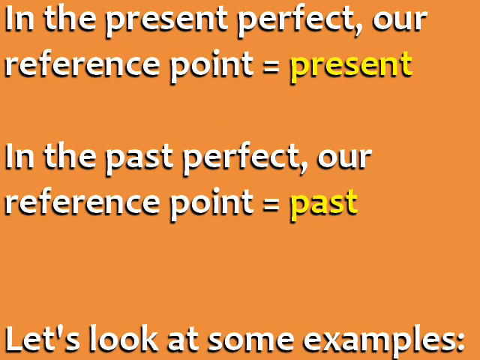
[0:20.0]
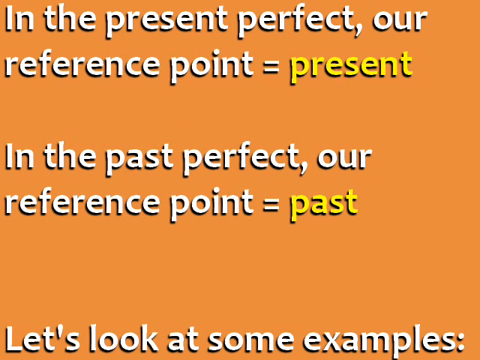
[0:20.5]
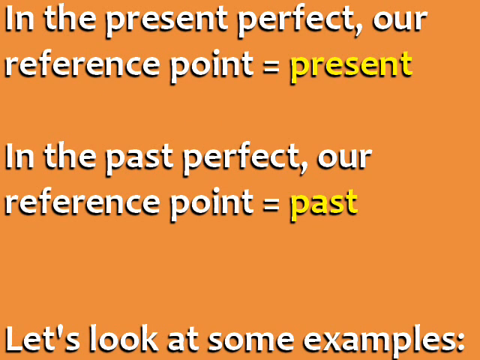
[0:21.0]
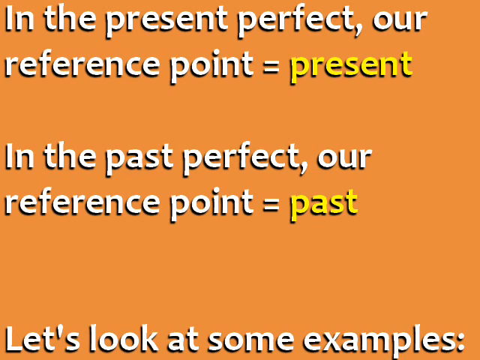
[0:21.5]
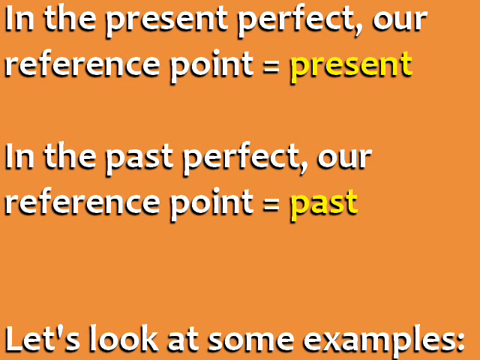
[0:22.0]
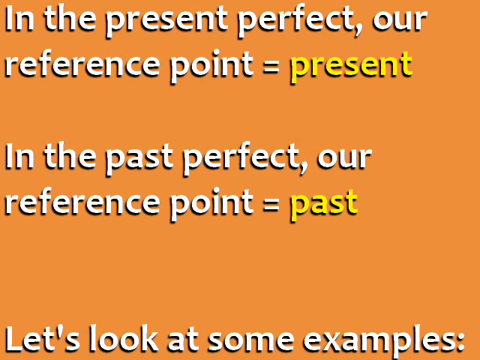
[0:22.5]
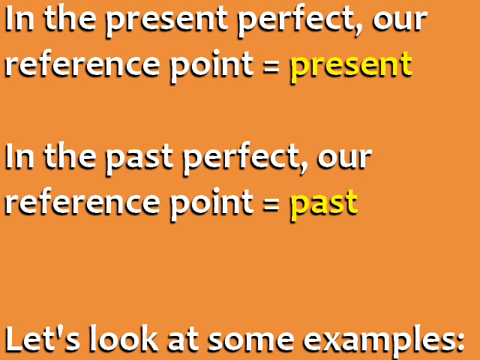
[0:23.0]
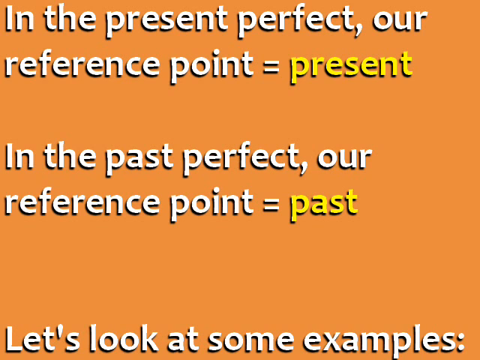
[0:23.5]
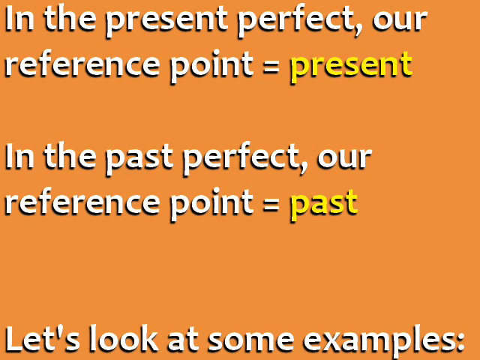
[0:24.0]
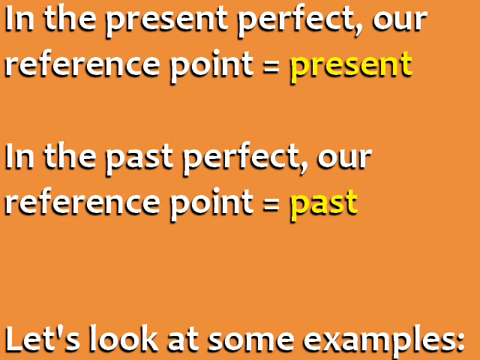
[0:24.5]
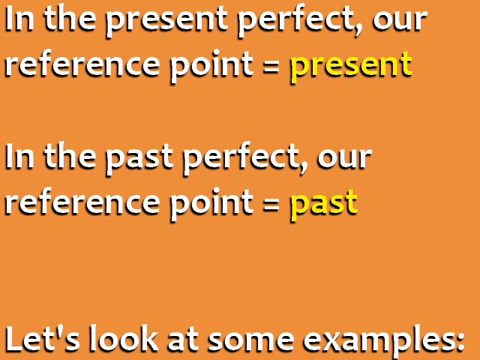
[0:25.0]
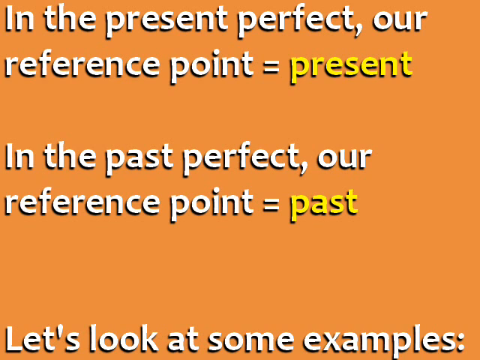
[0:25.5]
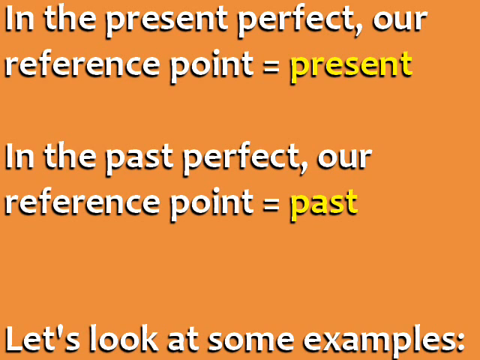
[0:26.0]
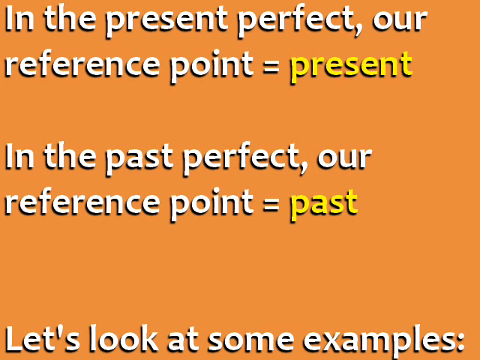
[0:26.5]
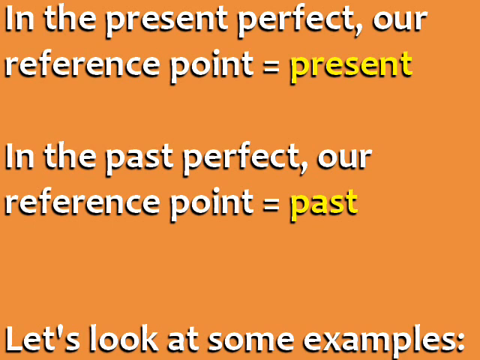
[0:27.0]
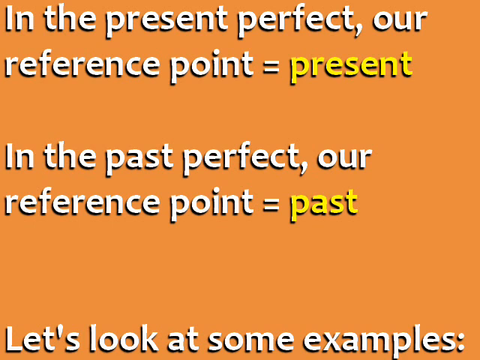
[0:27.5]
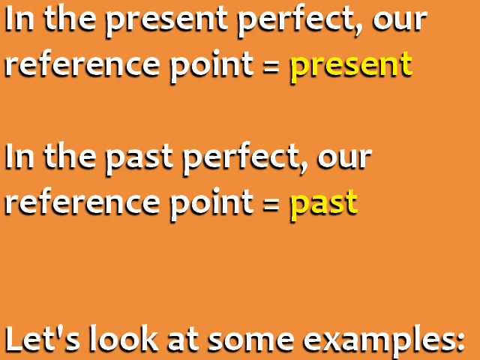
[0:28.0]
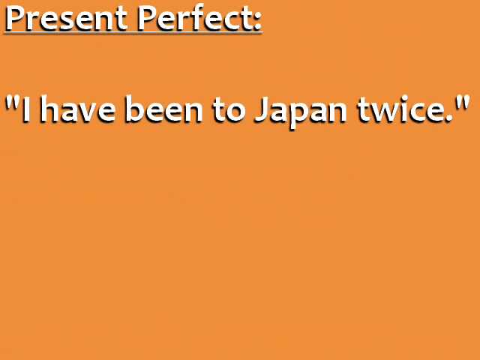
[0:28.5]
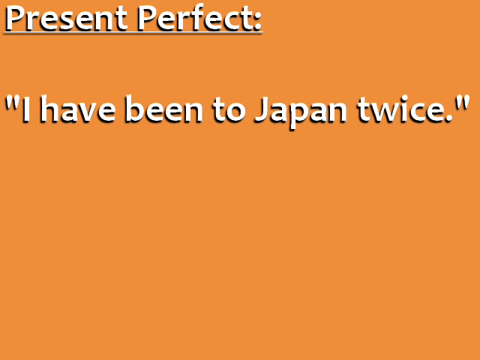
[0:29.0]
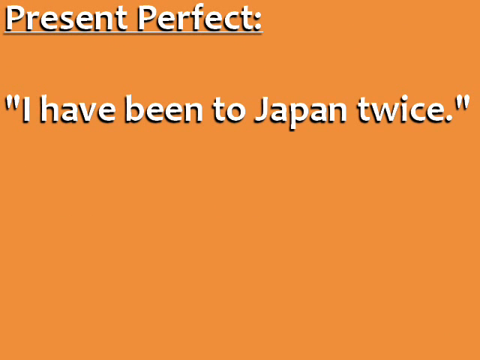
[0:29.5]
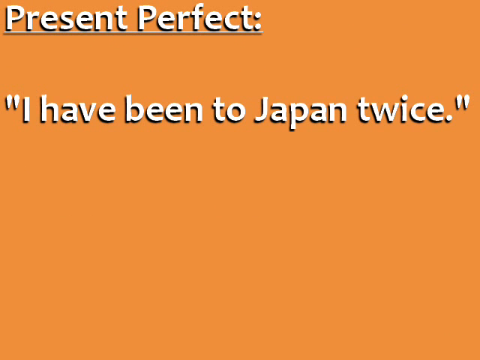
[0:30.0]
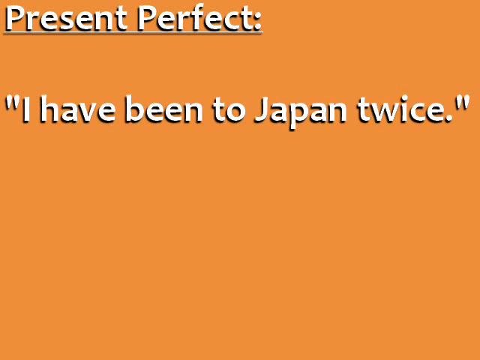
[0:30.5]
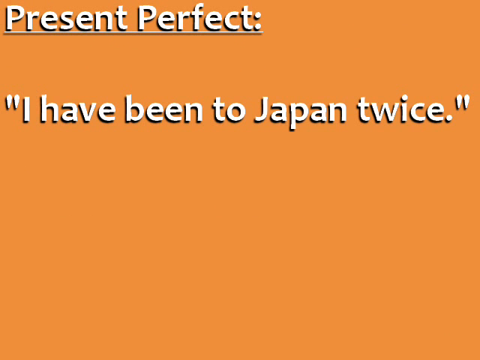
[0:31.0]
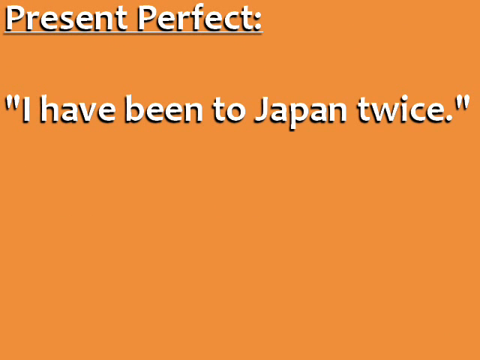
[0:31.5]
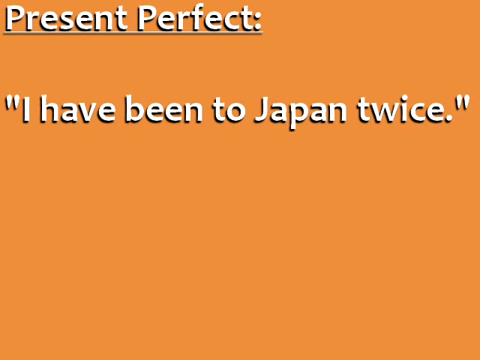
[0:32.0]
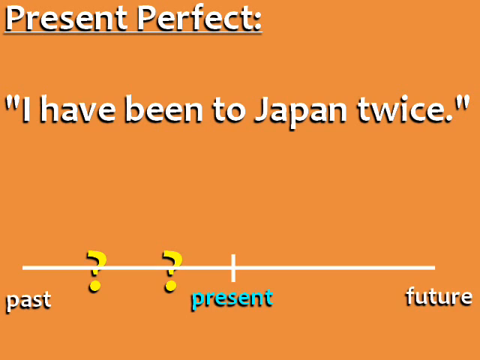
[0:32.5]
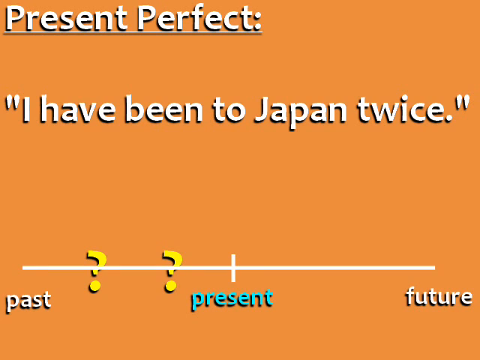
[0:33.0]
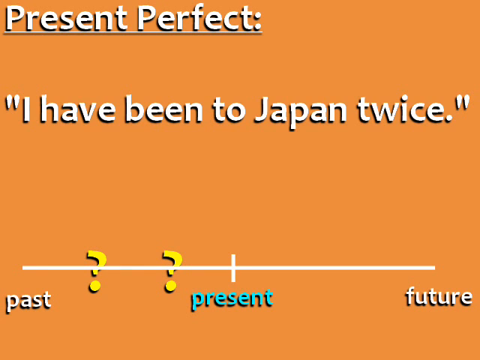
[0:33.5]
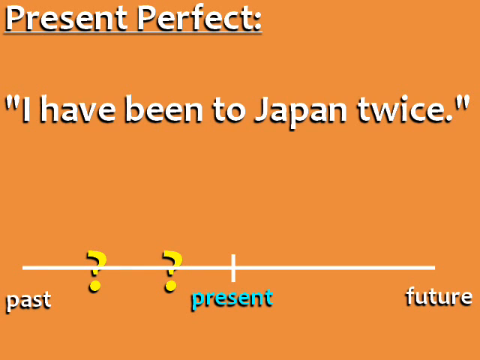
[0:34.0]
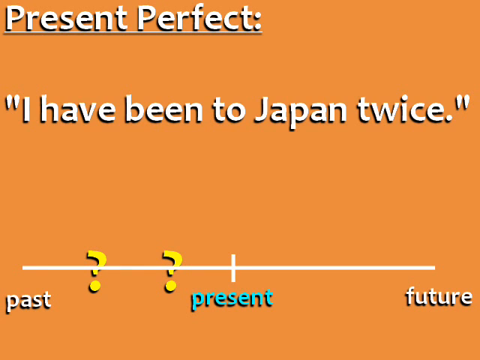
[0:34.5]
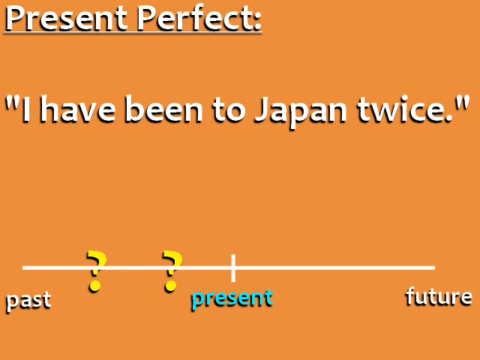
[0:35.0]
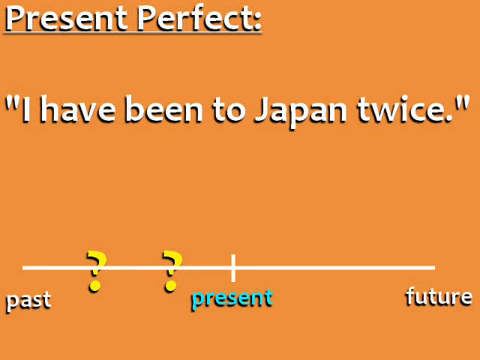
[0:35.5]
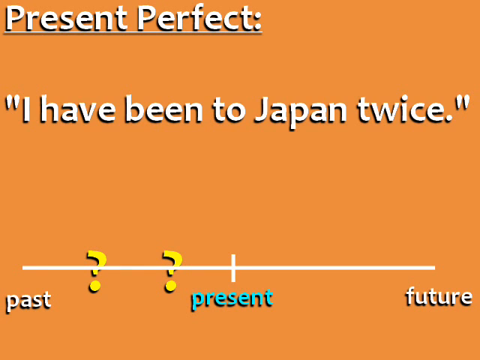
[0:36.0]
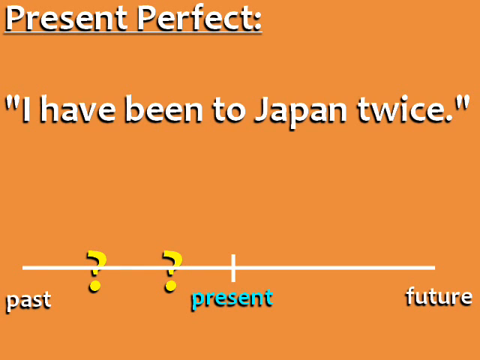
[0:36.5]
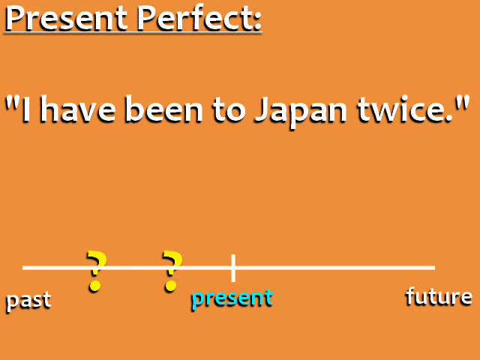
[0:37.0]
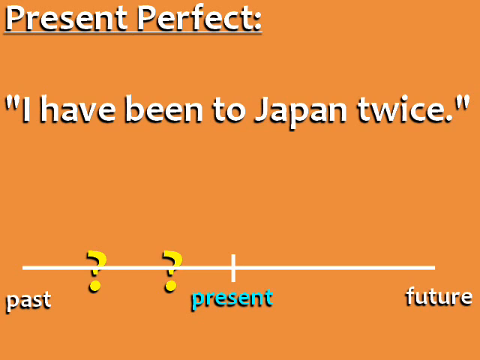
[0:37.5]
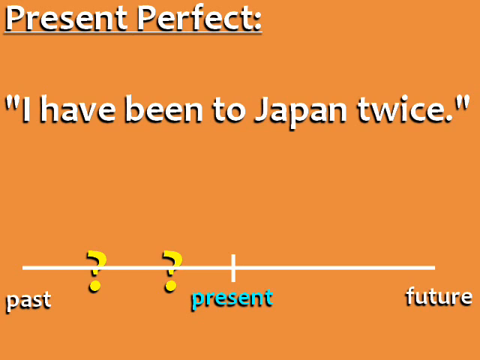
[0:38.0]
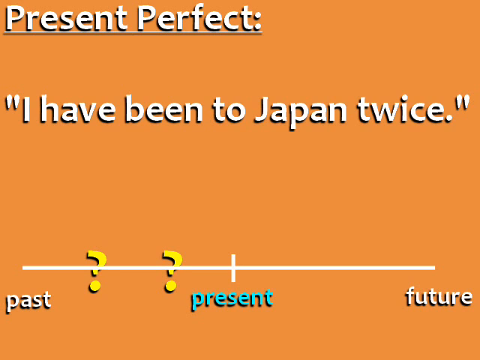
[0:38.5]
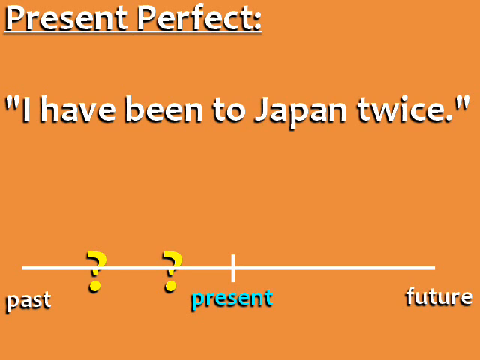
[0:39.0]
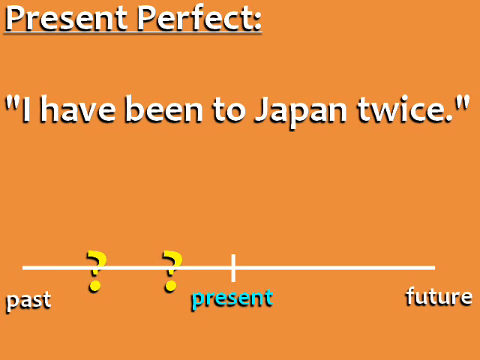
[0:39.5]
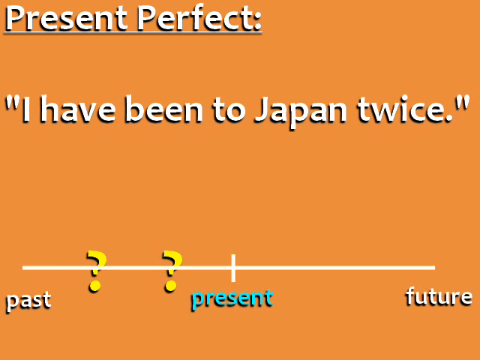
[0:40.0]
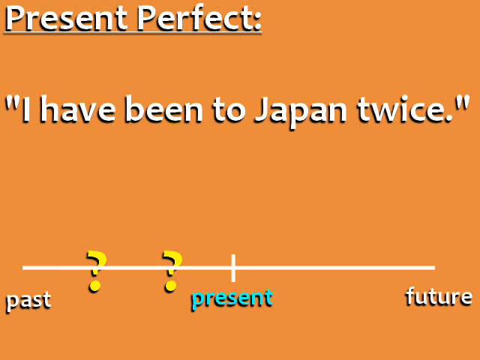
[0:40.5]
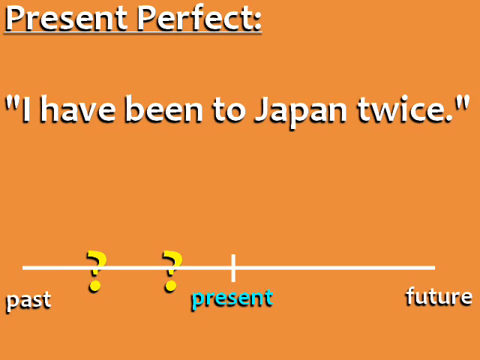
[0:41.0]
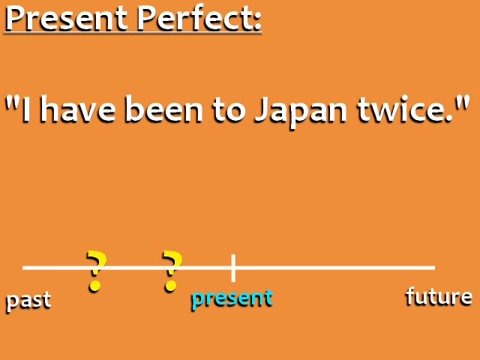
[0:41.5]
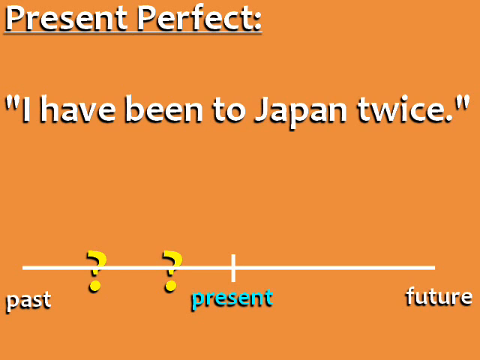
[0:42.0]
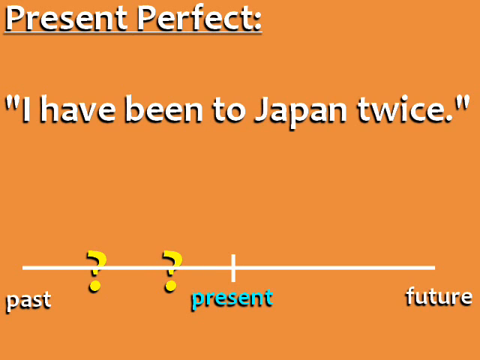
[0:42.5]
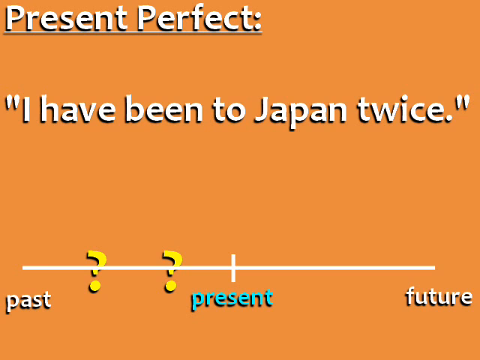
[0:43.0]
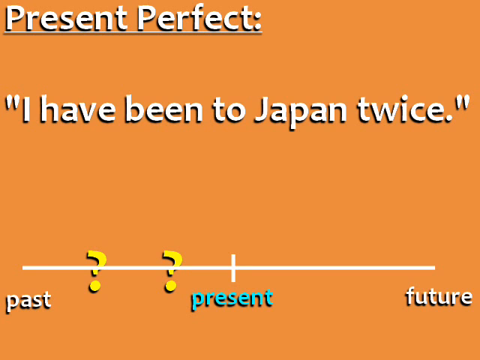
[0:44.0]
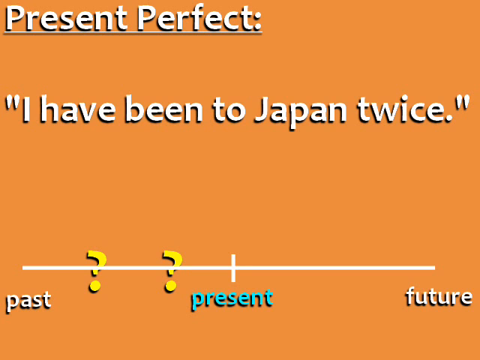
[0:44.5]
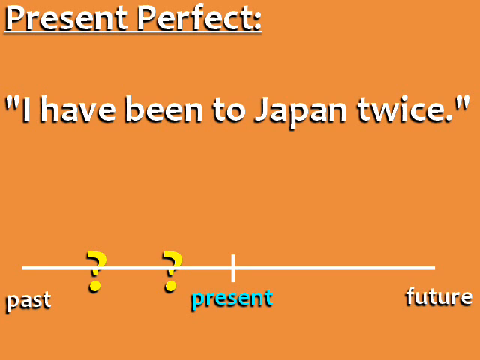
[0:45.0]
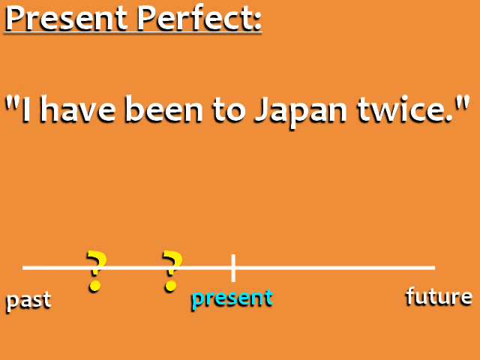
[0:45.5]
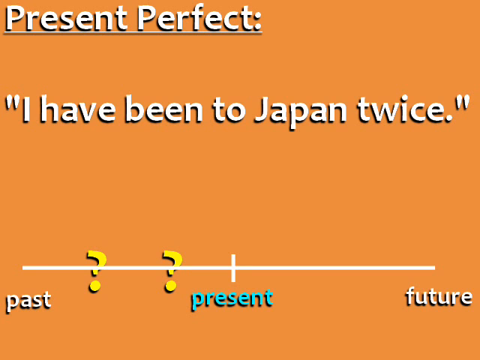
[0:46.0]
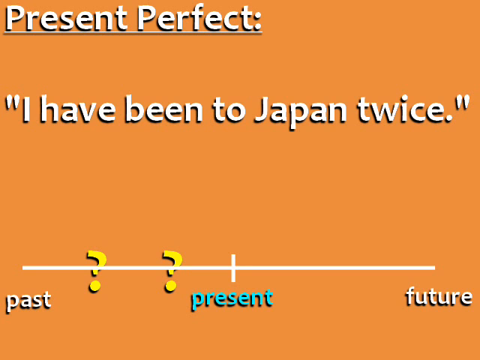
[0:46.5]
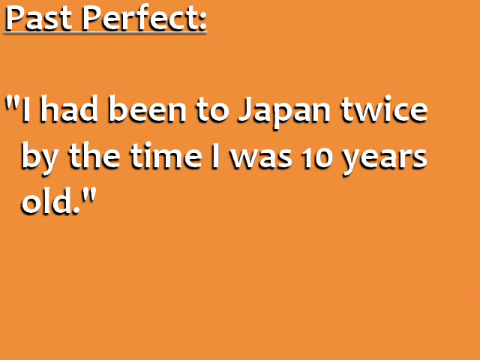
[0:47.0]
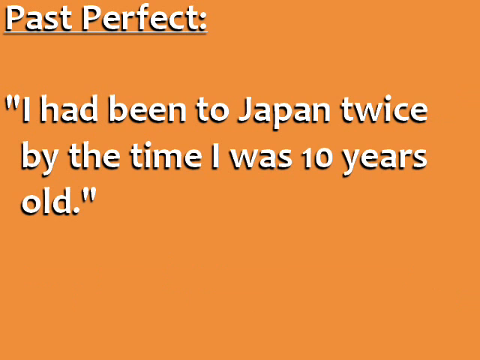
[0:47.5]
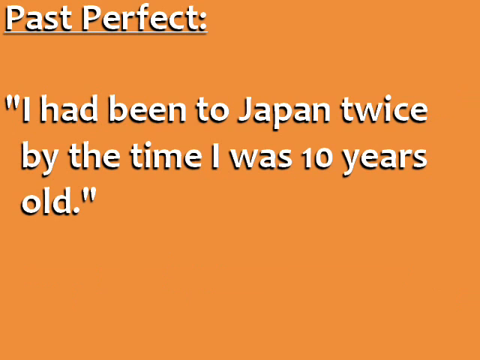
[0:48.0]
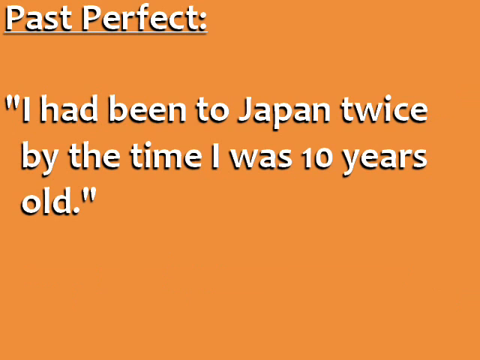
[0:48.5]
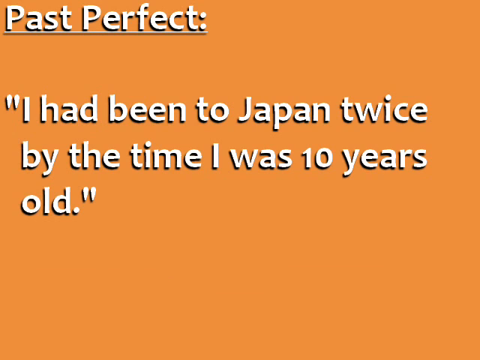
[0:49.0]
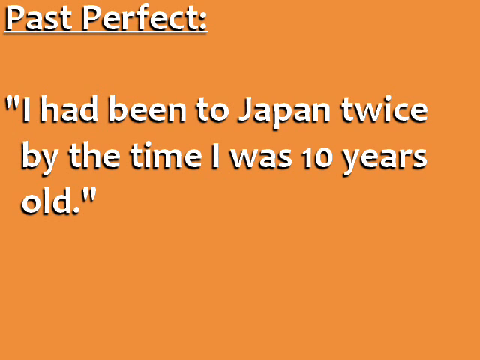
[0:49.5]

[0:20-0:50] The comparison between the two tenses continues, and below it a note says "let's look at some examples." An example reads "I've been to Japan twice," with two question mark symbols and a timeline marked past, then present in the middle, then future. Next a past perfect example is displayed, reading "I have been to Japan twice by the time I was 10 years old."